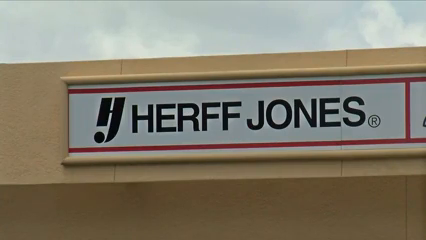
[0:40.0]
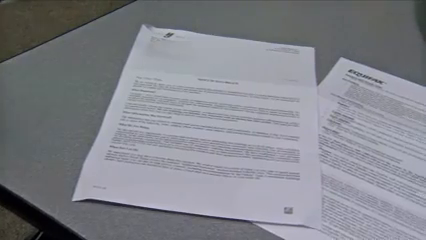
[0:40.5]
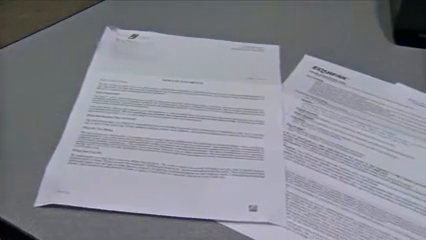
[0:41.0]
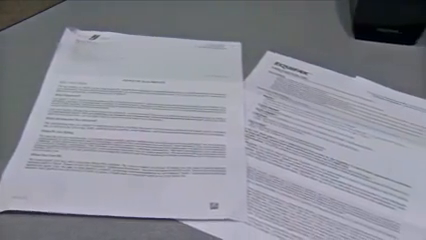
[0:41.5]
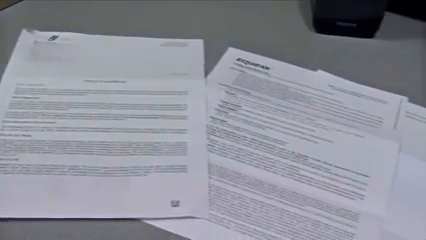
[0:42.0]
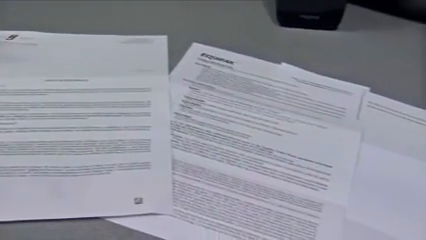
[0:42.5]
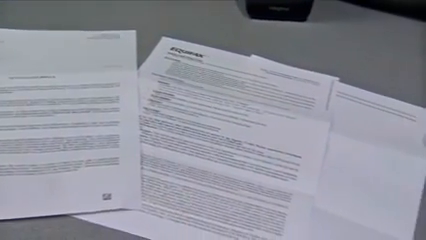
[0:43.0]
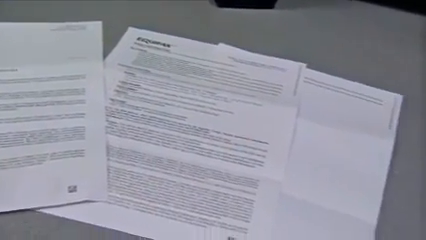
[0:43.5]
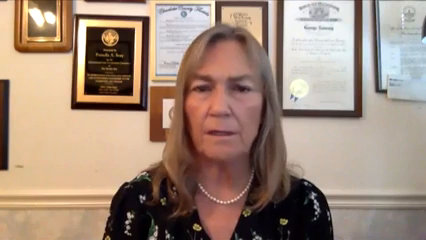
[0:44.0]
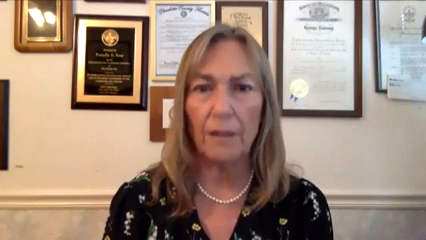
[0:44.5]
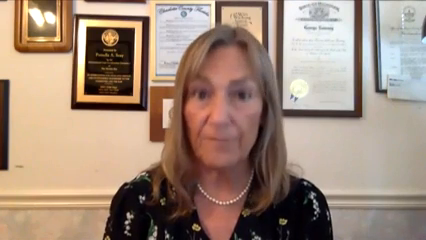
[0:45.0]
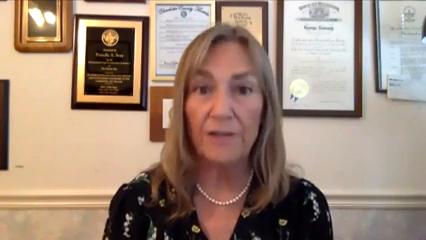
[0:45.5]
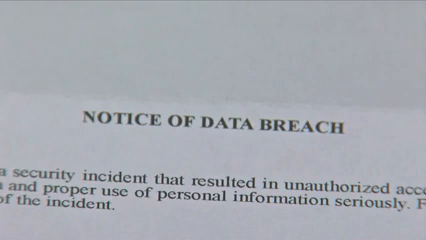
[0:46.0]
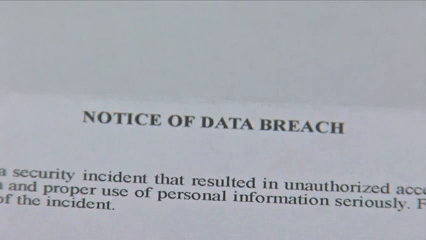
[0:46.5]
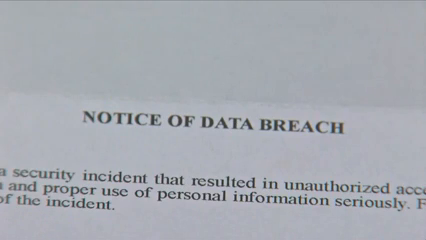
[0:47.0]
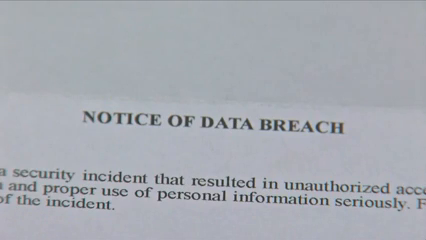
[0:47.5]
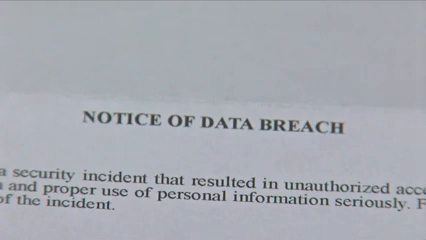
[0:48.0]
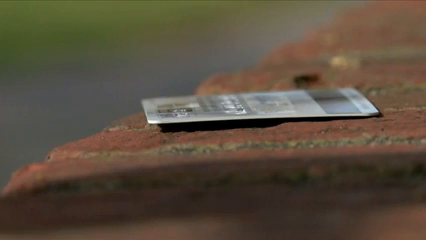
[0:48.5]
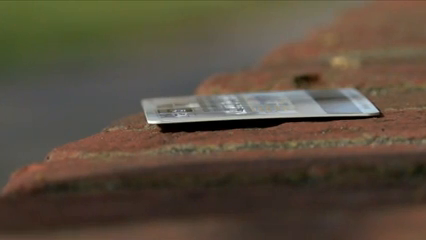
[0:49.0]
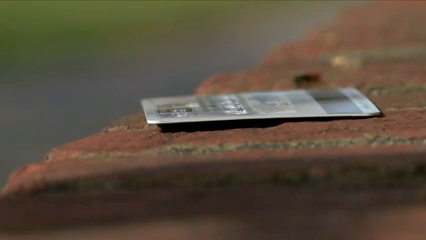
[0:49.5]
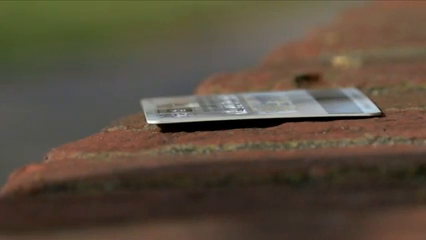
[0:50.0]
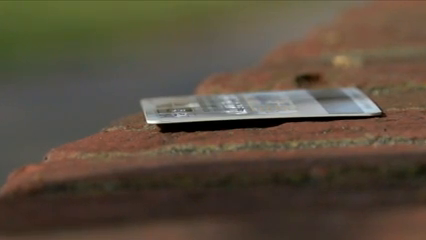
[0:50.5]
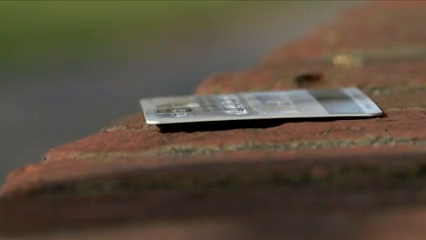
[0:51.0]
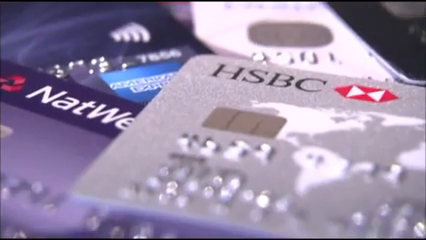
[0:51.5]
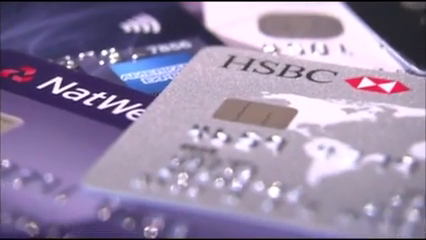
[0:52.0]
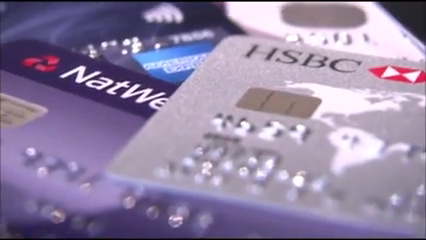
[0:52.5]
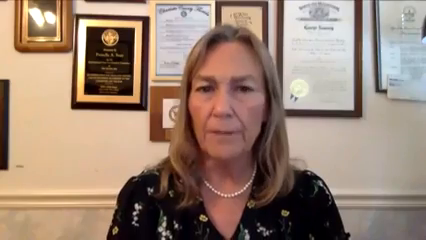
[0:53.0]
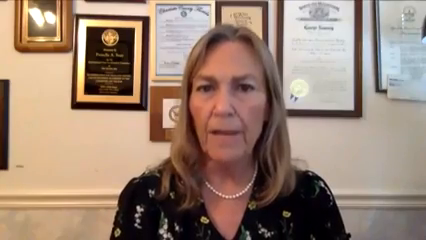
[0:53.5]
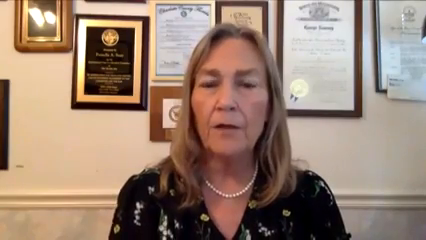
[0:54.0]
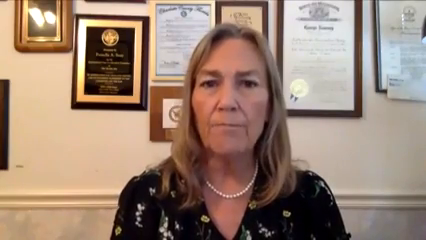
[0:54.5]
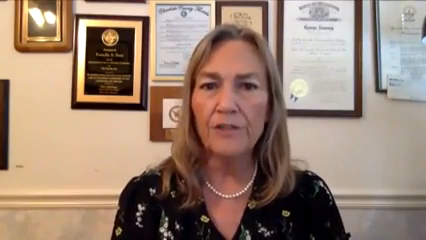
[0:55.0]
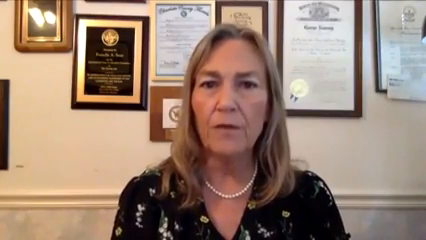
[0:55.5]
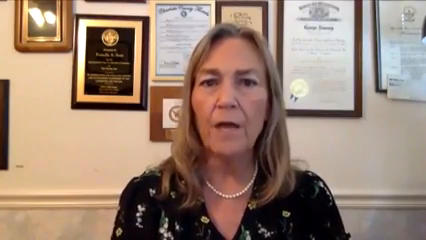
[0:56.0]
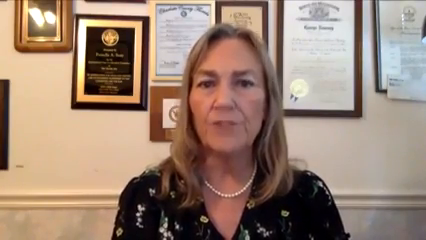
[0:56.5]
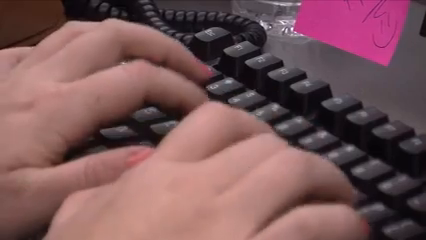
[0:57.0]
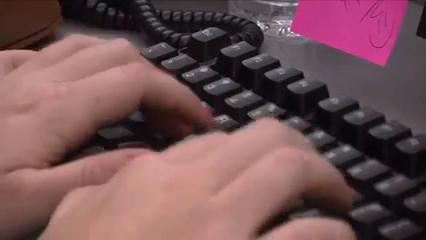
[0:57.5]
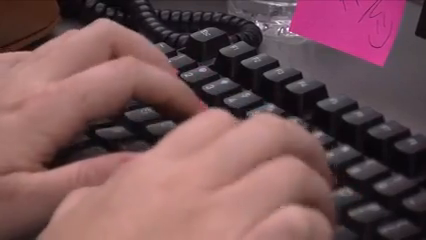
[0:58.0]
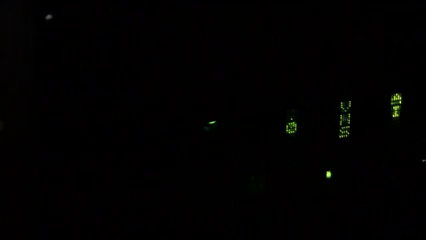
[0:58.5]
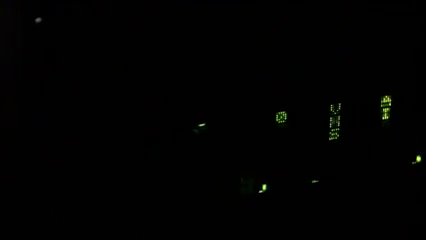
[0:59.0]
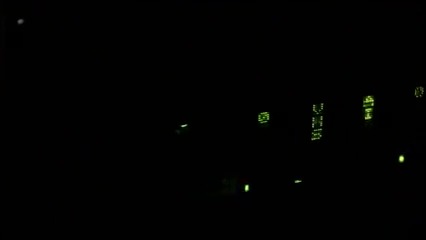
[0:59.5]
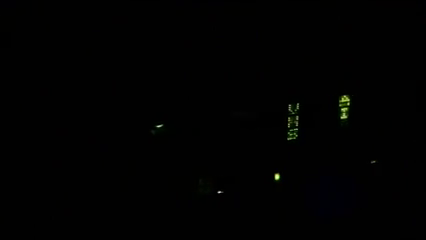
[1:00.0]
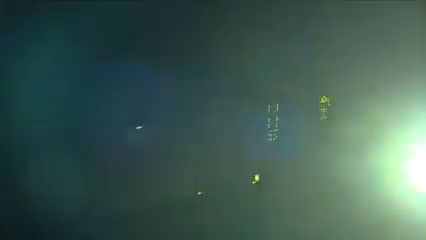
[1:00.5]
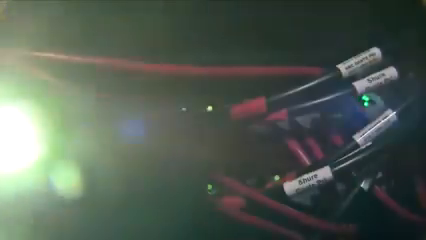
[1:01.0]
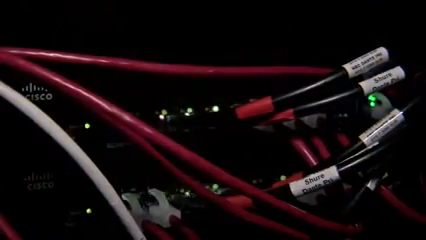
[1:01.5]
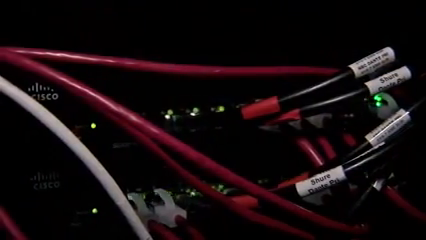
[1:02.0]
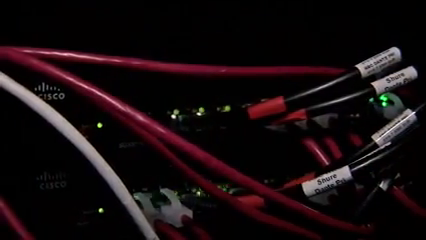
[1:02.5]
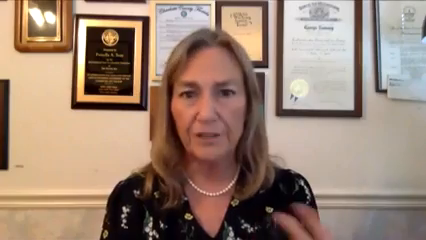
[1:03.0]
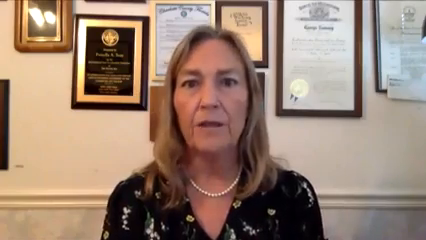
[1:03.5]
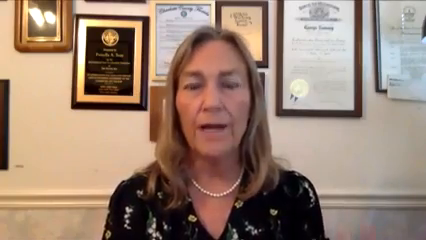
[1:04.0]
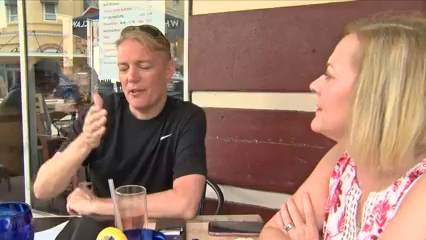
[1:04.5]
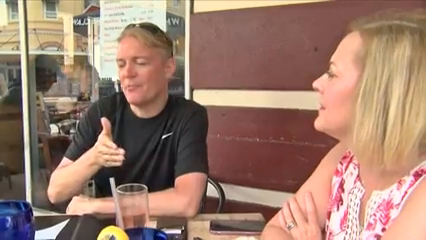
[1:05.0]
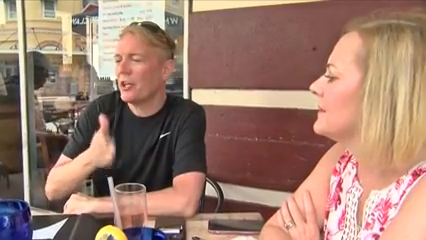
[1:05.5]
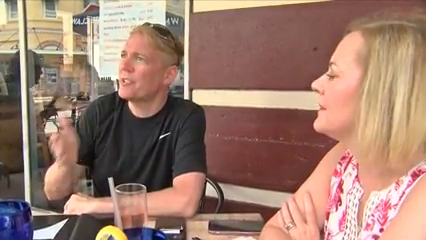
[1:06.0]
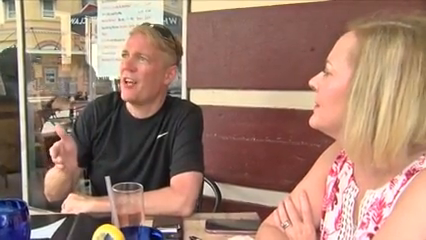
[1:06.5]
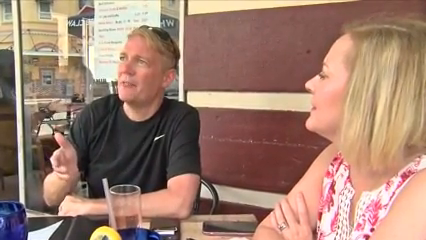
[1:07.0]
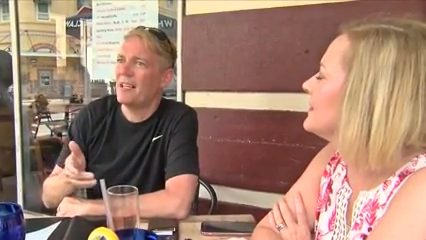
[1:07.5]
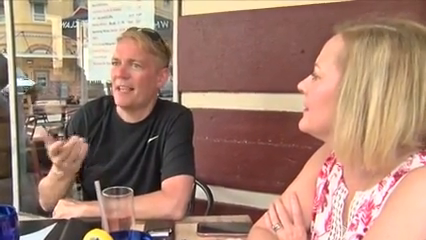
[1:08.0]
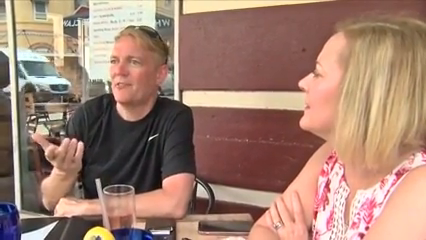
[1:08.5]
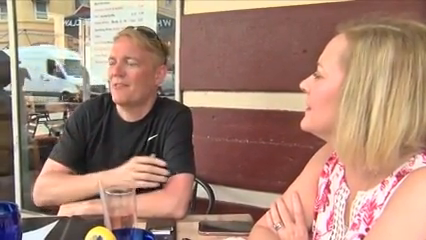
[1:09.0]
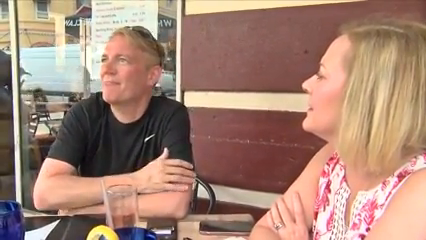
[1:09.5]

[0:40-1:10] Pieces of paper lie on a grey table as the camera zooms from left to right. The woman with the pearl necklace appears again in front of the wall of diplomas, raising her eyebrow as she speaks. A close-up of a piece of paper shows bold letters reading "notice of data breach." Next is a close-up of a flat item that looks like it is on top of bricks, something silver, almost like a lanyard, possibly a credit card. Various credit cards are then shown stacked on each other, zoomed in close: the one on top is HSBC, and on the bottom left there is an American Express. The woman with the pearl necklace speaks again before a cut to fingers typing on a keyboard, with a pink sticky note bearing a smiley face on the top right. The dark room appears with yellow lights and "VHS" in the middle, followed by a bunch of wires and lights from the computer. After another shot of the woman, the couple eats outside in front of a glass of water. The man wears a black t-shirt with sunglasses on his head, and the woman wears a sleeveless white and red dress; both have blonde hair.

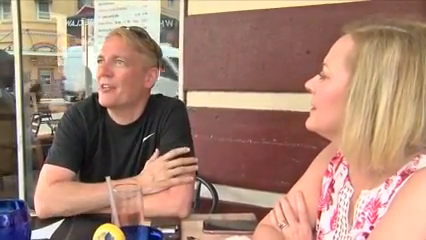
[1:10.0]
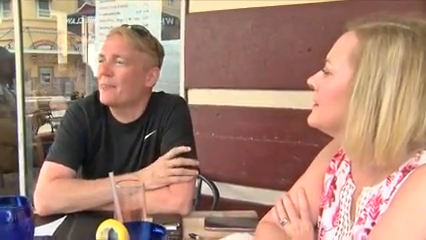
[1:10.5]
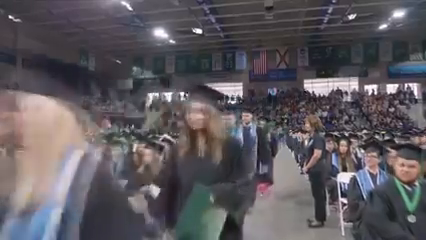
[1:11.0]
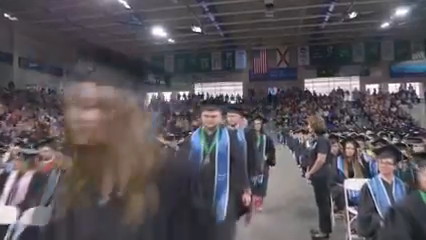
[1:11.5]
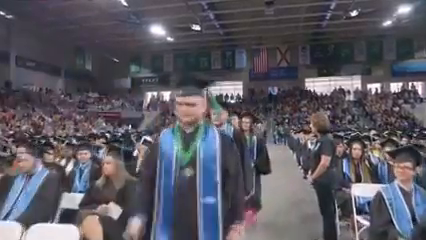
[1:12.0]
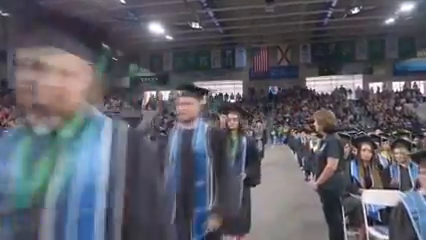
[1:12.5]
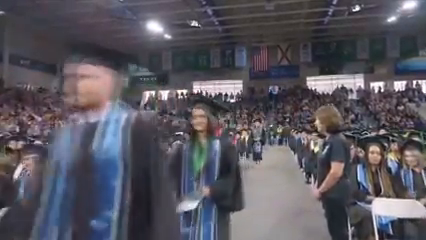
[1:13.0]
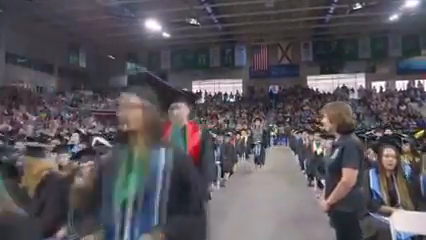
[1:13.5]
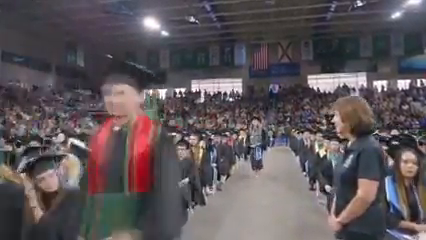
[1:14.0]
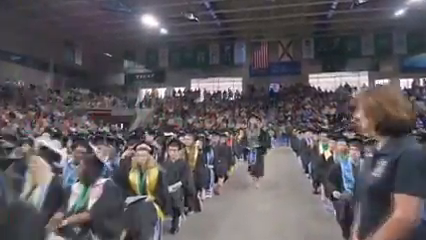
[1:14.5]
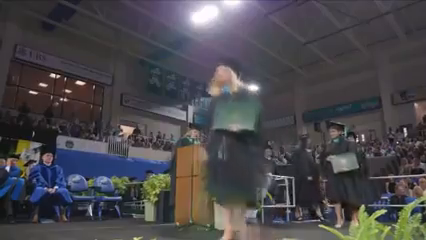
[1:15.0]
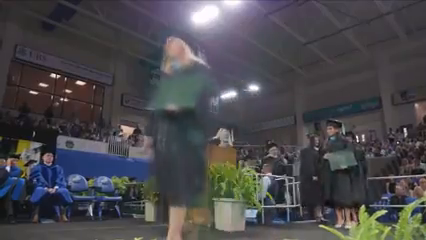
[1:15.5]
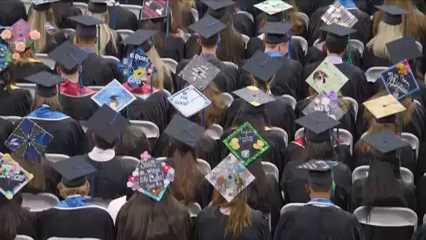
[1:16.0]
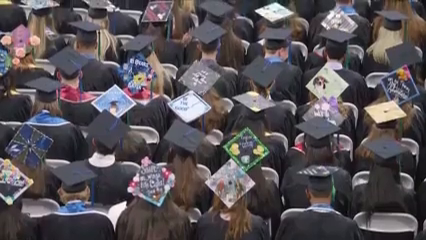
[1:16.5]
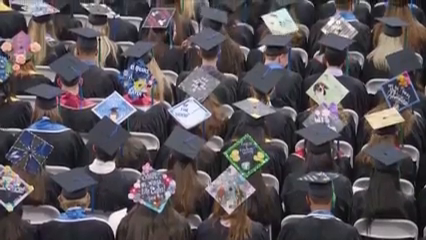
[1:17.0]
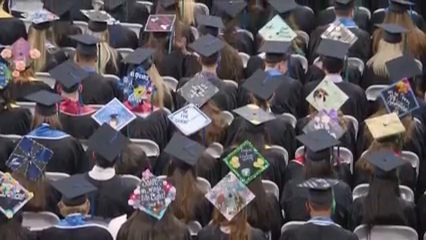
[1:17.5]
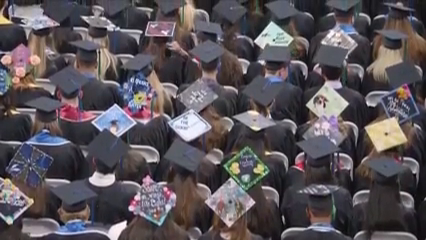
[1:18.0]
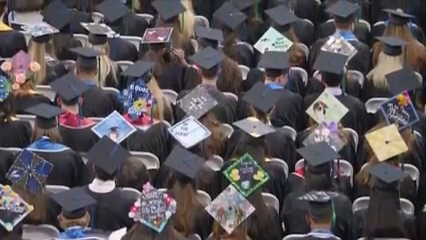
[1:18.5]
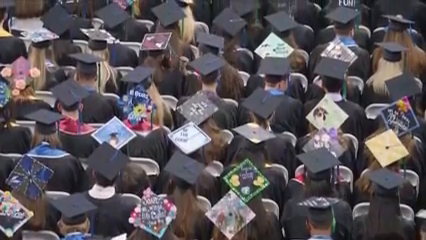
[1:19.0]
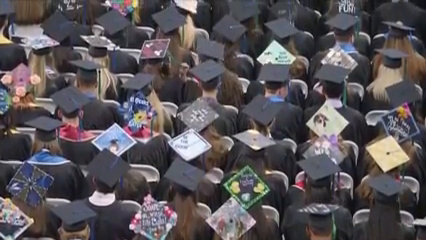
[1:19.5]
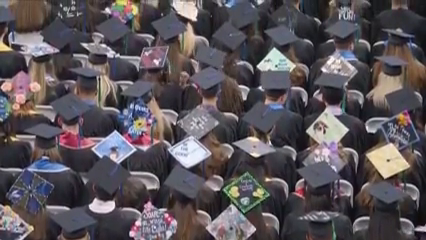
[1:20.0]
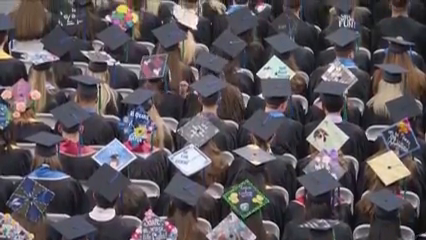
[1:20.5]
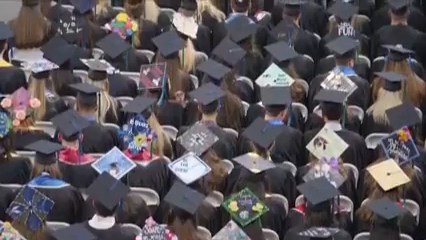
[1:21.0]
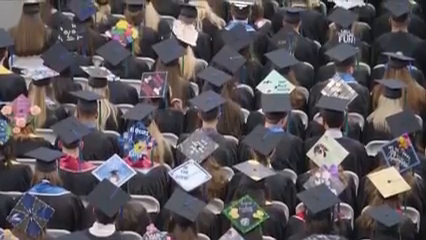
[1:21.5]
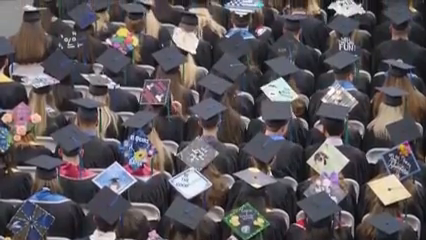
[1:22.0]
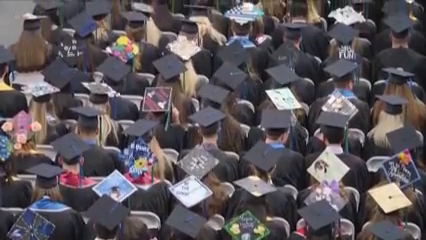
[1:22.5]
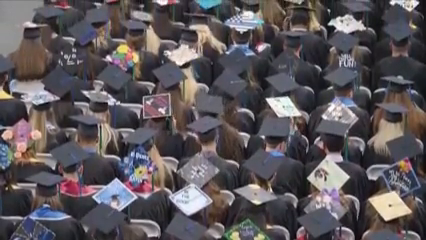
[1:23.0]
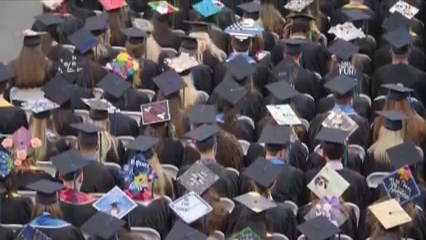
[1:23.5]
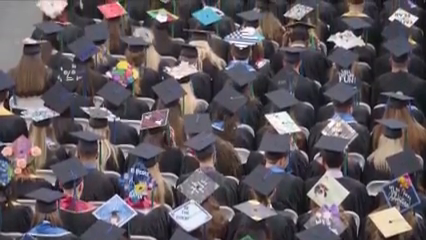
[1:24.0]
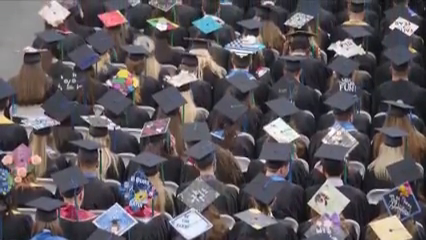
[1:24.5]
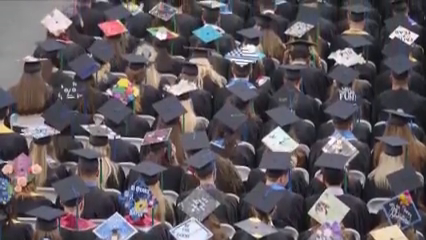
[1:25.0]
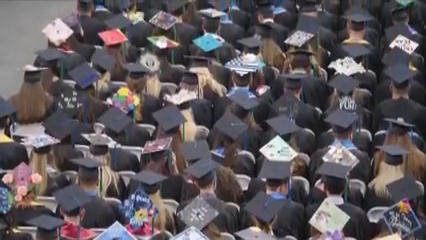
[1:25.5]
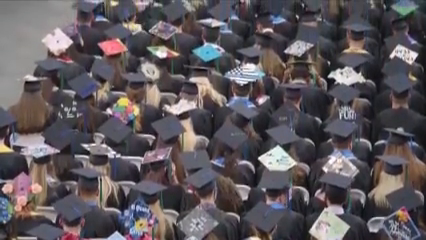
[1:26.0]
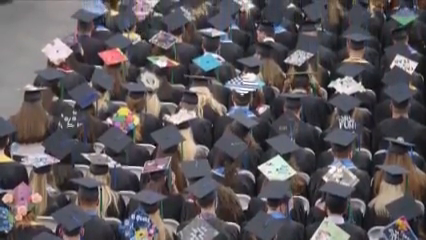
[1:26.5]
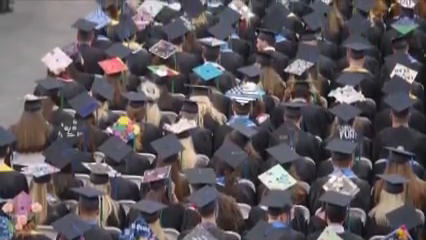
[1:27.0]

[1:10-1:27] The video returns to the graduation. Inside the arena, which is filled with people, lots of graduates on the right and left, seated in a row, walk toward the camera; there are probably about 500 people. The camera goes through the aisle as people walk toward it. People graduating walk across a stage with their diplomas in green. Graduates are seated in their square hats, some of which have designs, apparently flowers and birds. About 50 people are shown, about 15 of them with designs on their hats, some quite colorful, as the camera zooms up and shows another 40 or 50, more with designs on the hats. One appears to be an American flag, one is painted in Italian colors of green, white and red, some have words on them, one appears to have a face, one is green with yellow on the sides, one has what looks like possibly a sunflower, and one is all red.